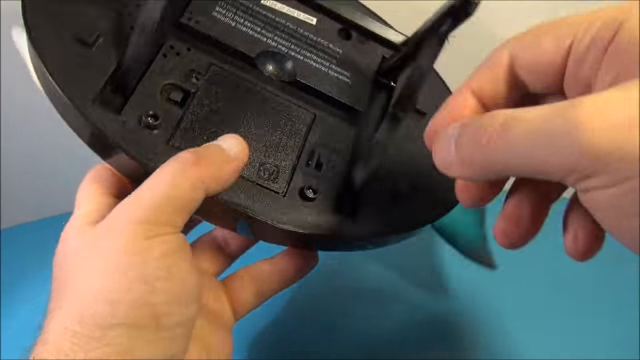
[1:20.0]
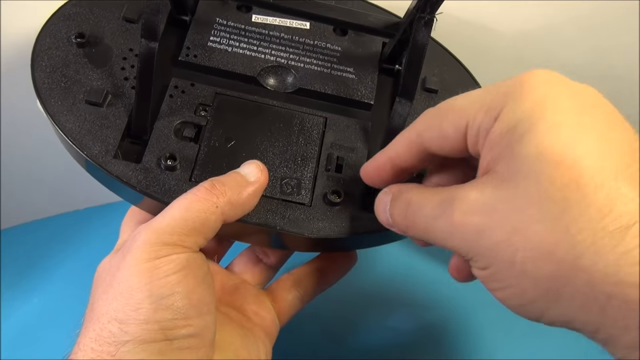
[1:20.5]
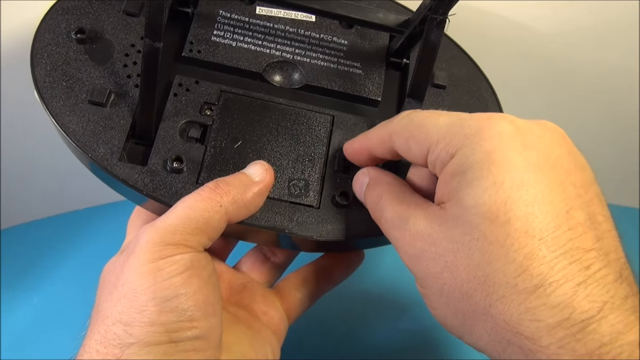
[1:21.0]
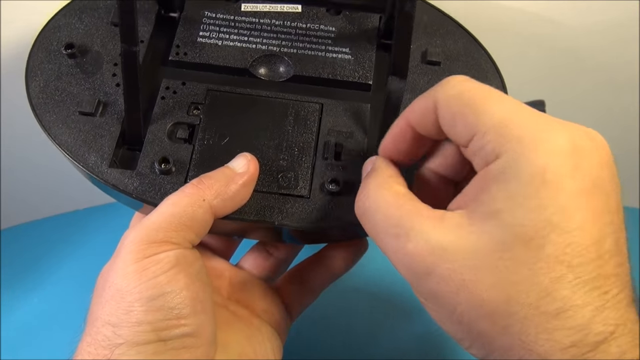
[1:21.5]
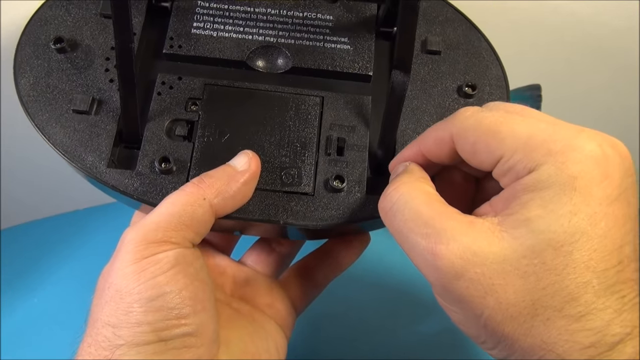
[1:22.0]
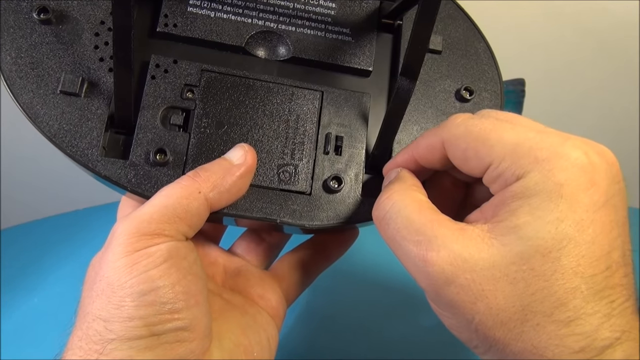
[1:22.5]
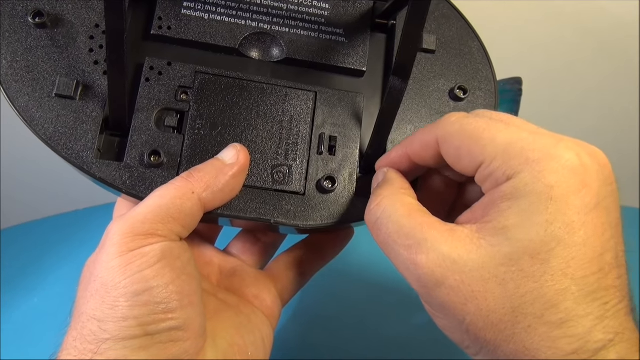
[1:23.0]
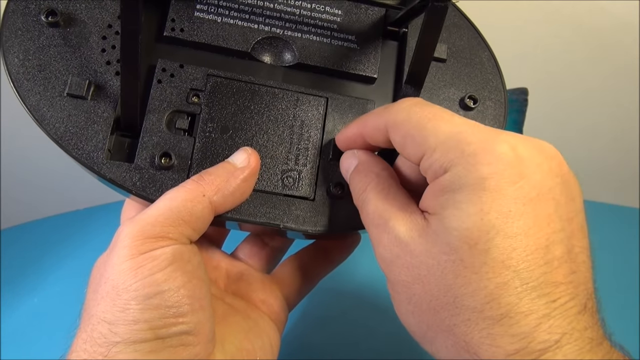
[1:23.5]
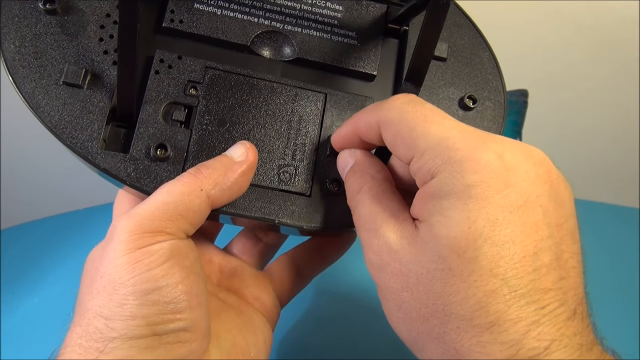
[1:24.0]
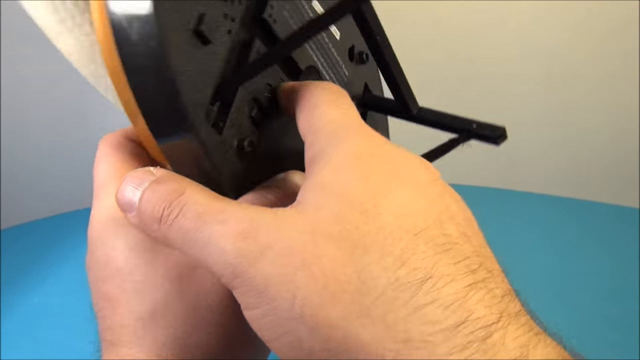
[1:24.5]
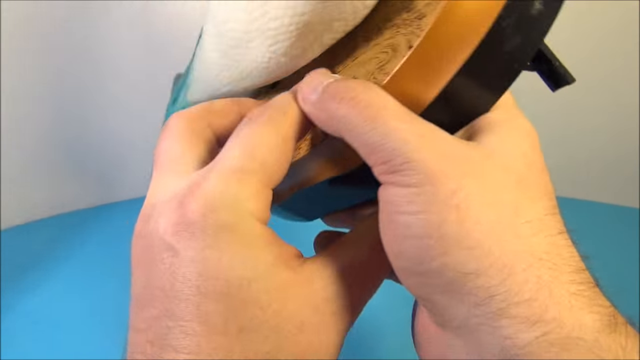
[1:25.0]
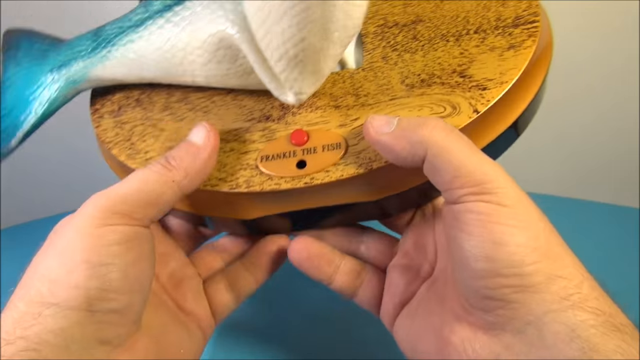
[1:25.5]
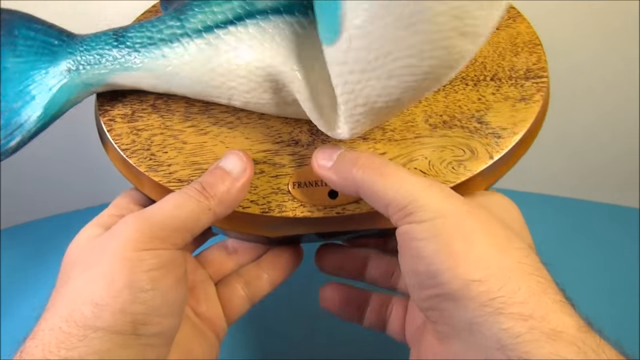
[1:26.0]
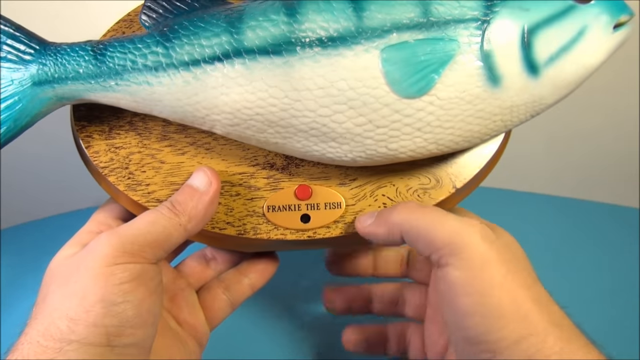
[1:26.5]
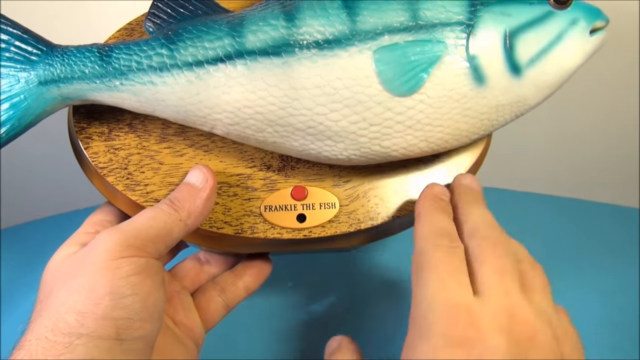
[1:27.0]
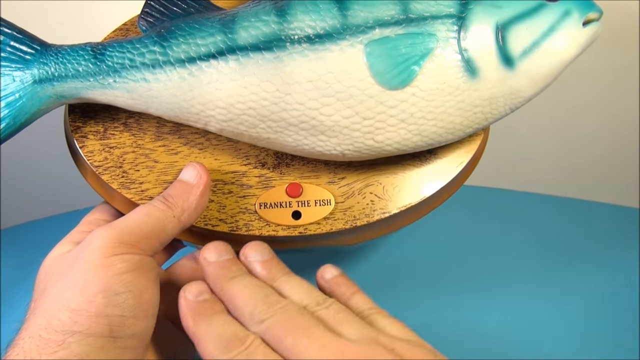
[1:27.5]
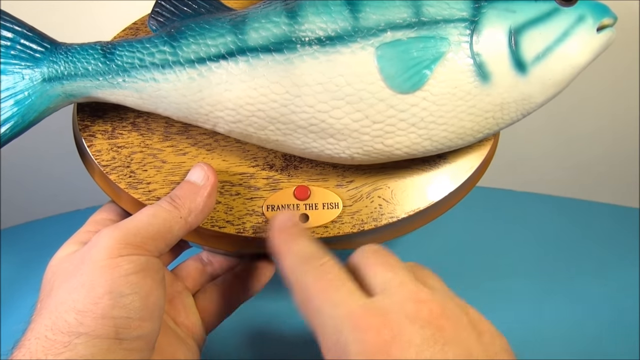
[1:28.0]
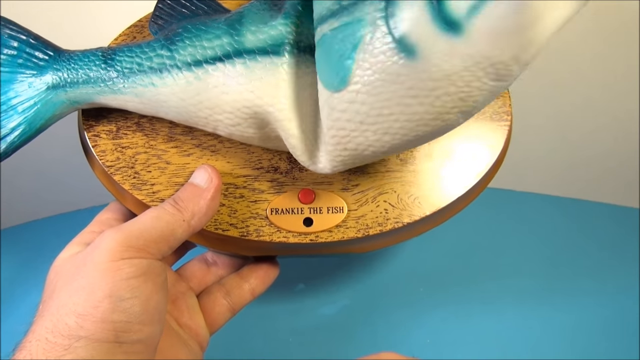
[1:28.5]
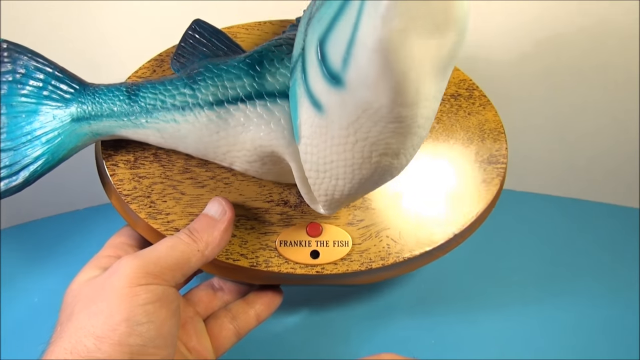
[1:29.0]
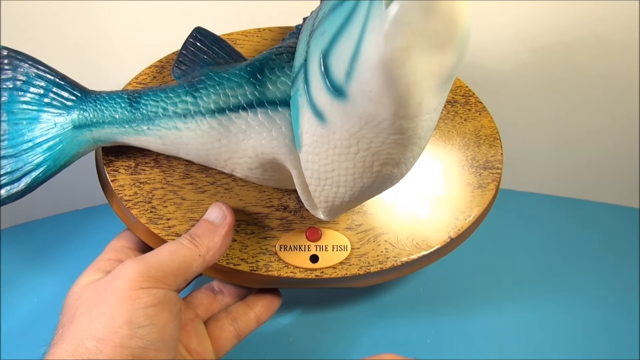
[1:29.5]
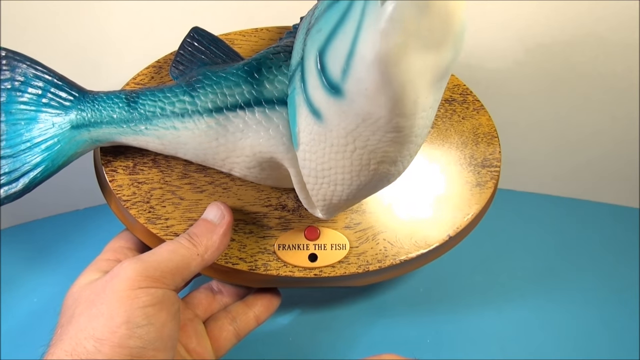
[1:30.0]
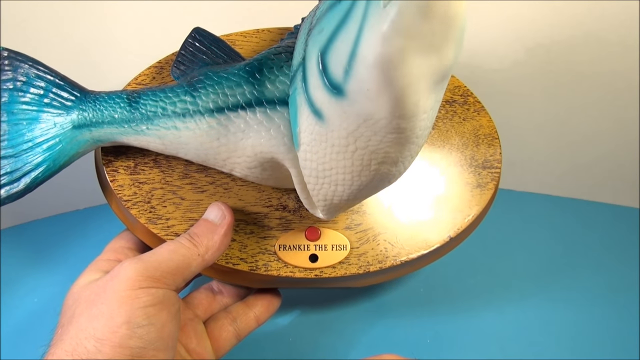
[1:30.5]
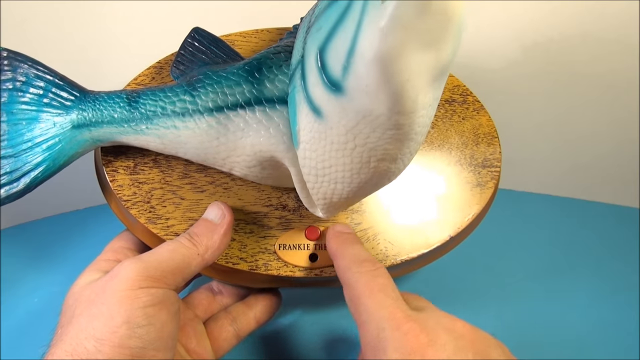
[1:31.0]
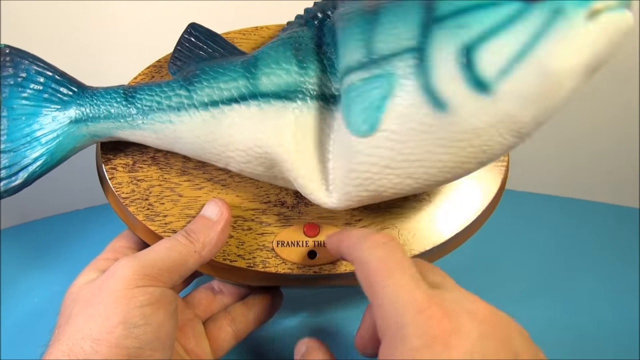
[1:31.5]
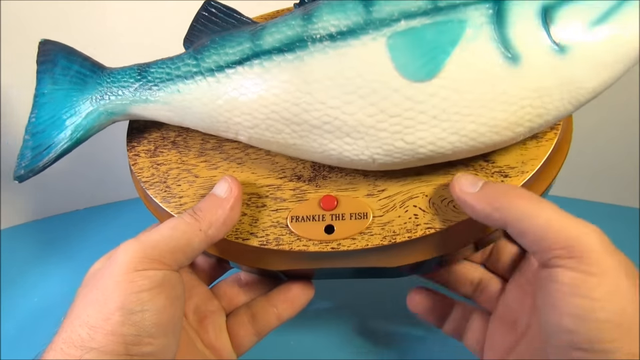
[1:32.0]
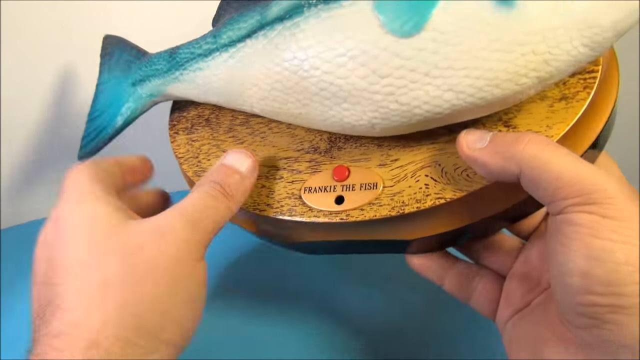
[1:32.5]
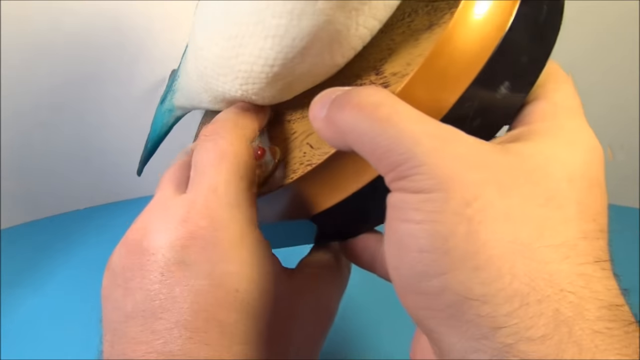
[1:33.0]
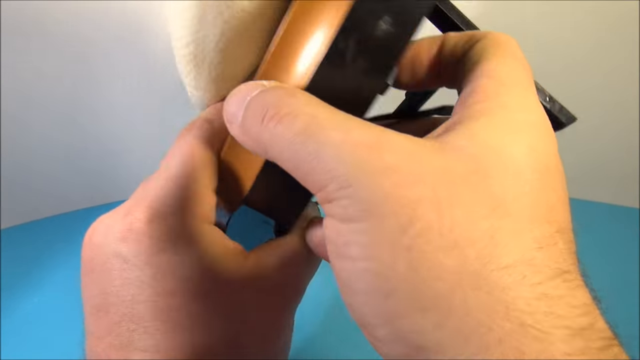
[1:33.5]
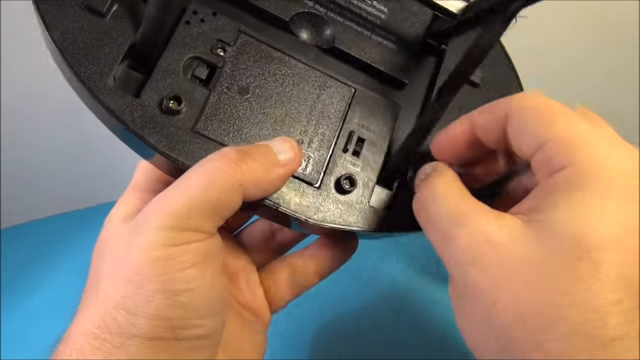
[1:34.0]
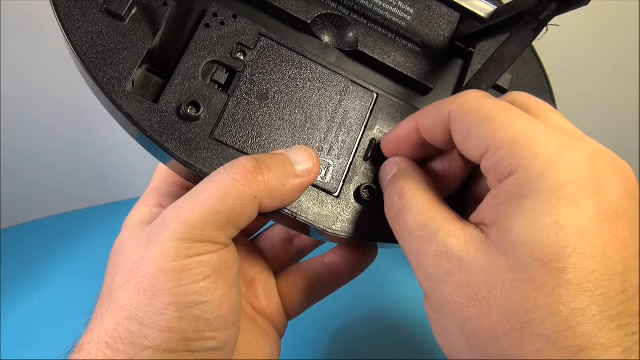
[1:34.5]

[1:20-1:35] The person holds the fish on its mounting plate in their left hand and flips a switch on the back of the plate with the index finger of their right hand. They turn the fish back over and press the red button again; the fish's head turns 90 degrees and it begins singing. The person presses the red button again, the fish stops singing and returns to its flat state, and the fish and plate are turned over so the person can flip the vertical switch again. The tail does not appear to move at all and stays flat; the 90-degree bend occurs just before where the top fin ends.